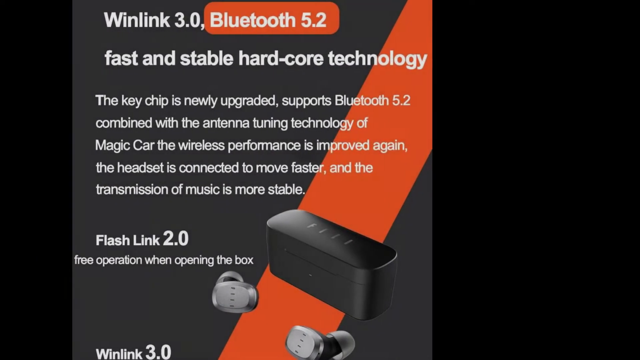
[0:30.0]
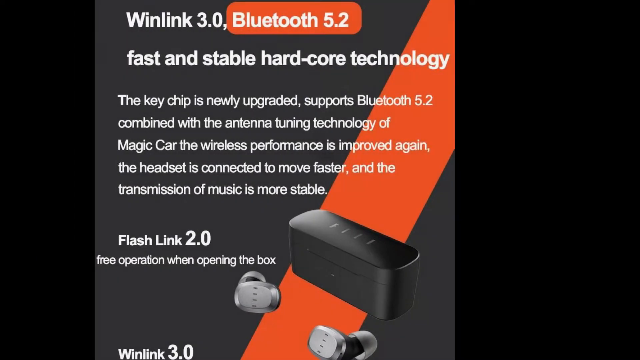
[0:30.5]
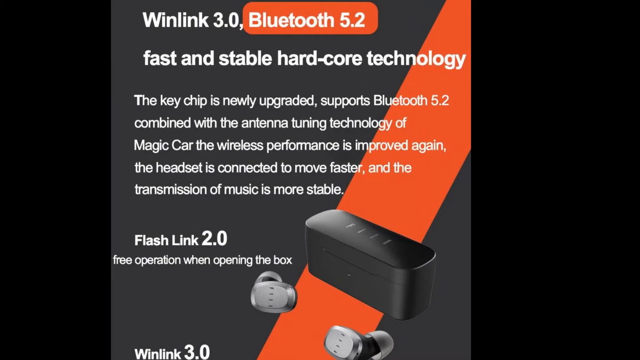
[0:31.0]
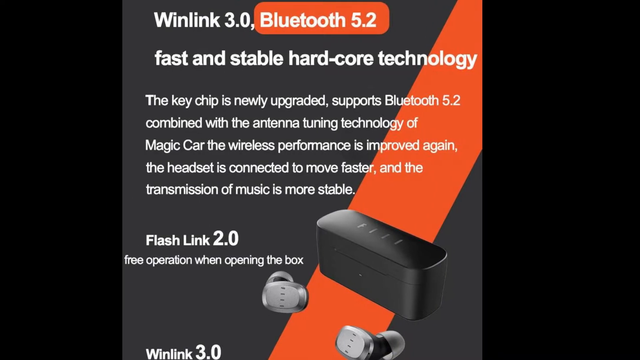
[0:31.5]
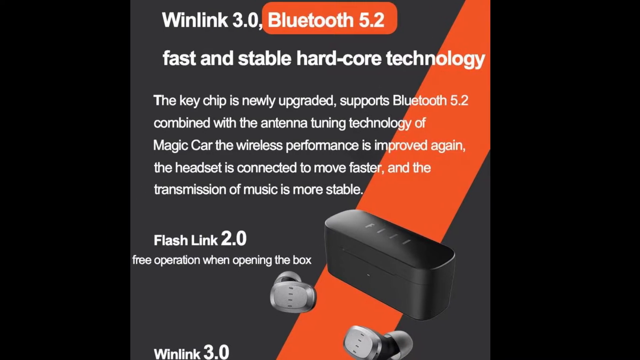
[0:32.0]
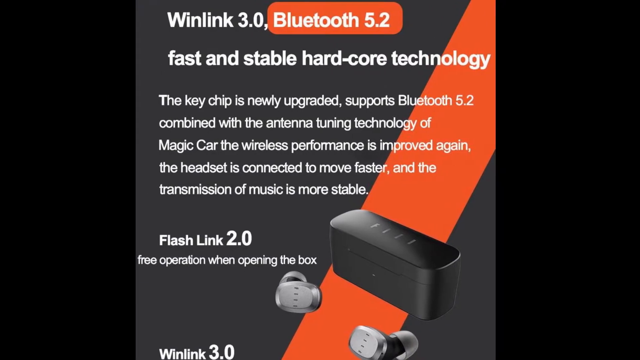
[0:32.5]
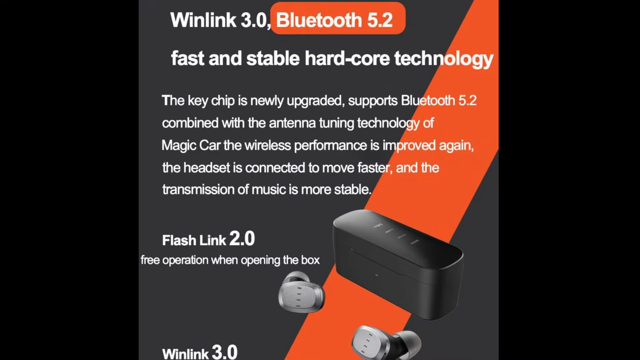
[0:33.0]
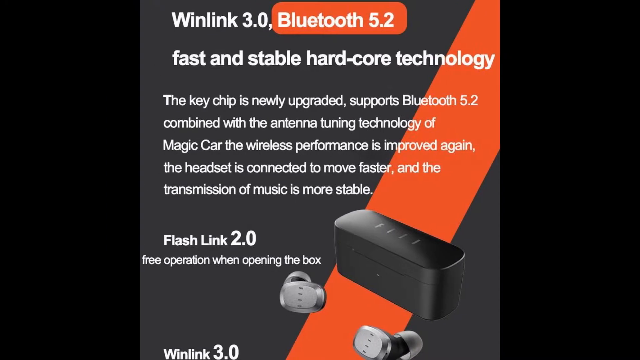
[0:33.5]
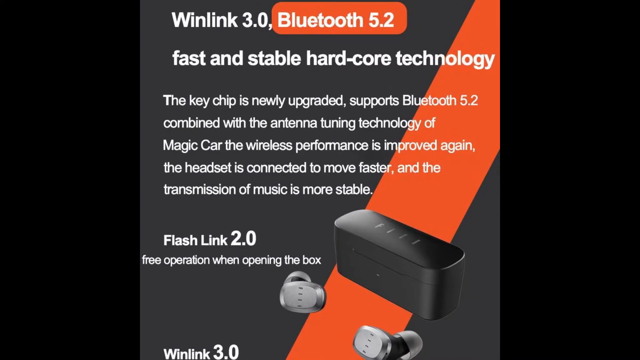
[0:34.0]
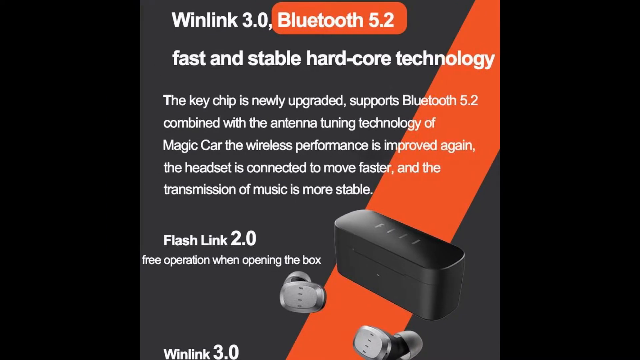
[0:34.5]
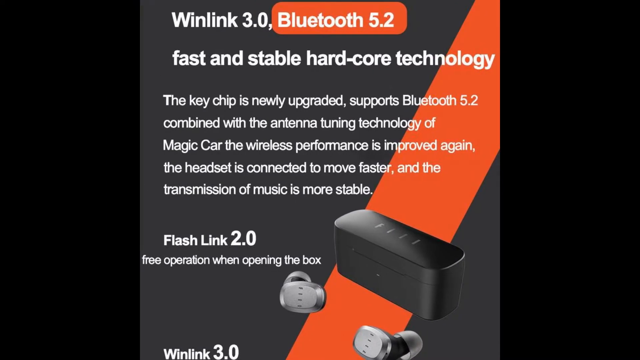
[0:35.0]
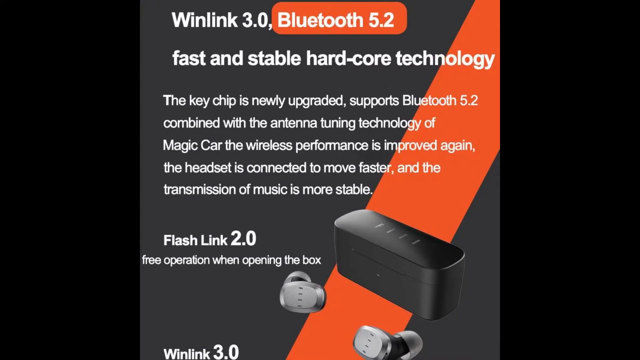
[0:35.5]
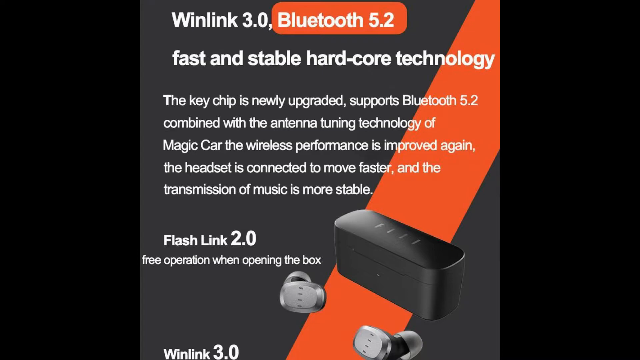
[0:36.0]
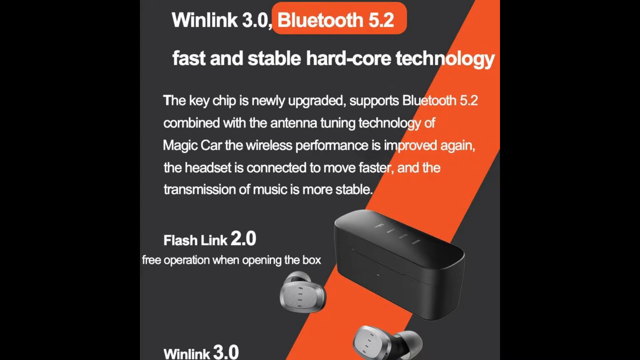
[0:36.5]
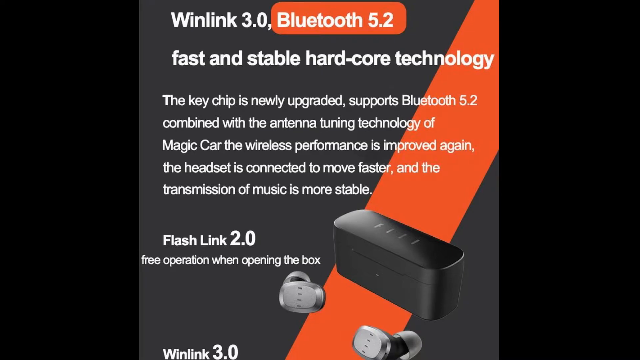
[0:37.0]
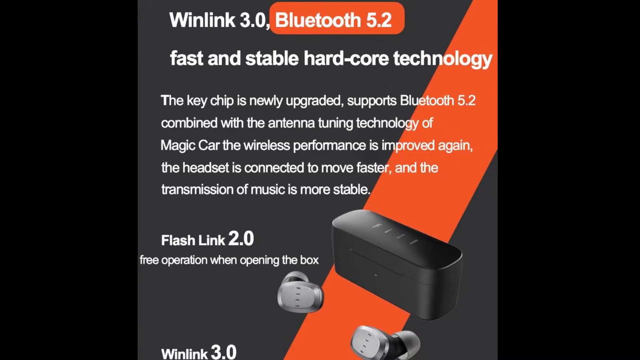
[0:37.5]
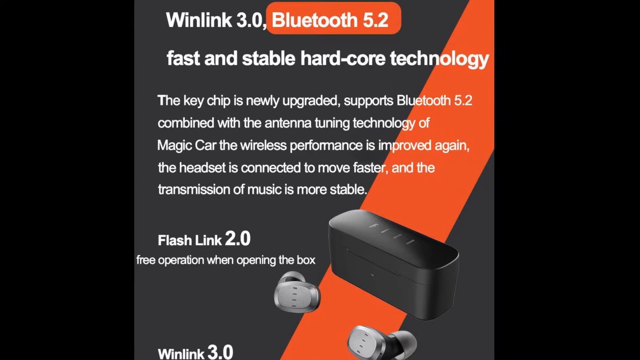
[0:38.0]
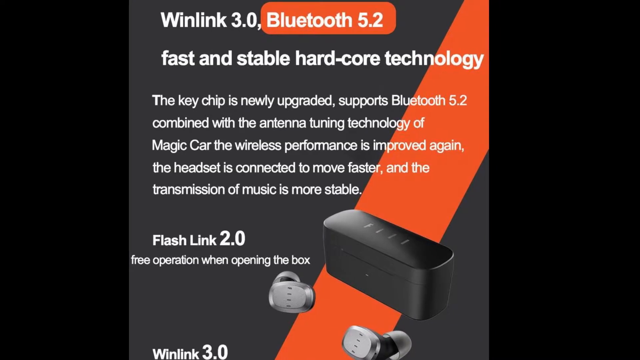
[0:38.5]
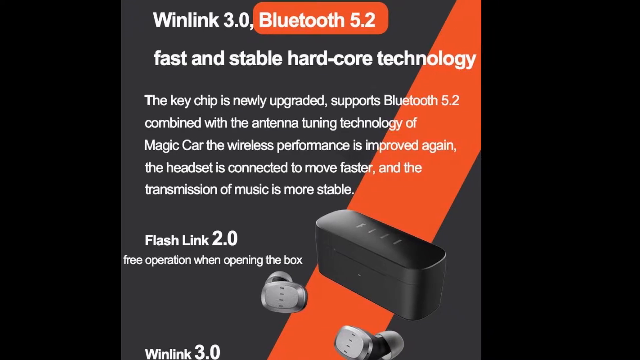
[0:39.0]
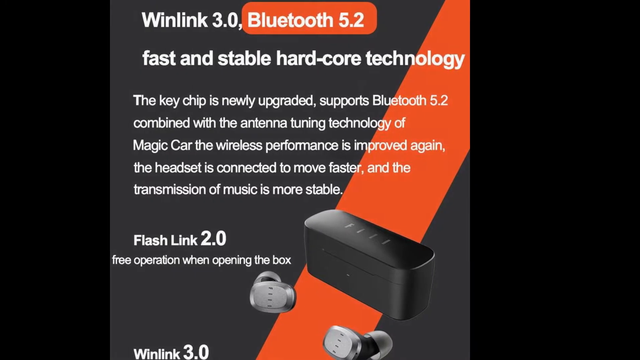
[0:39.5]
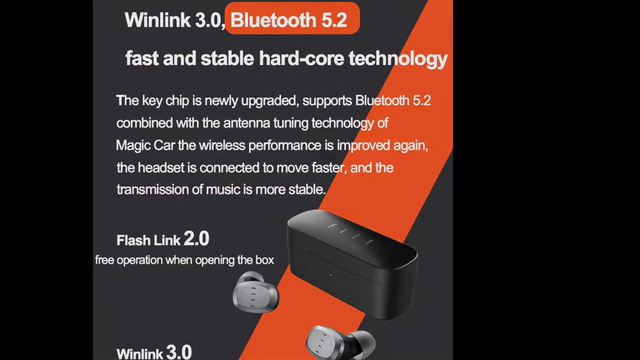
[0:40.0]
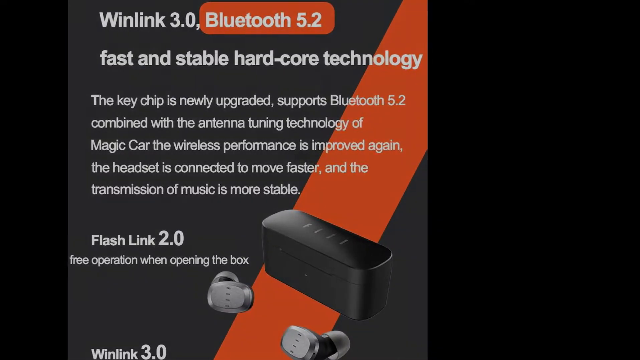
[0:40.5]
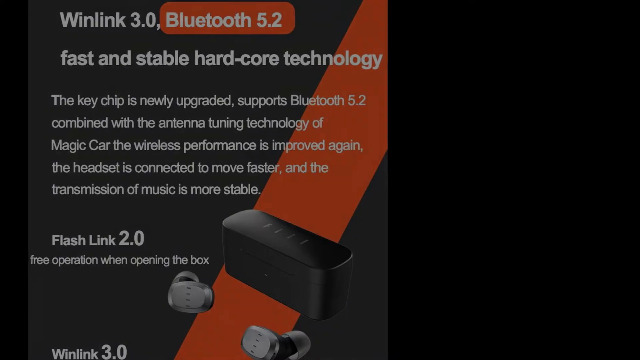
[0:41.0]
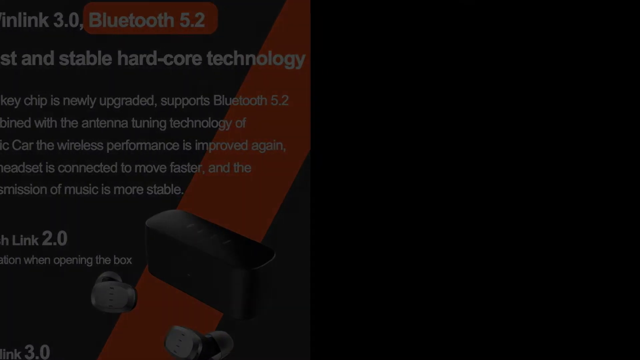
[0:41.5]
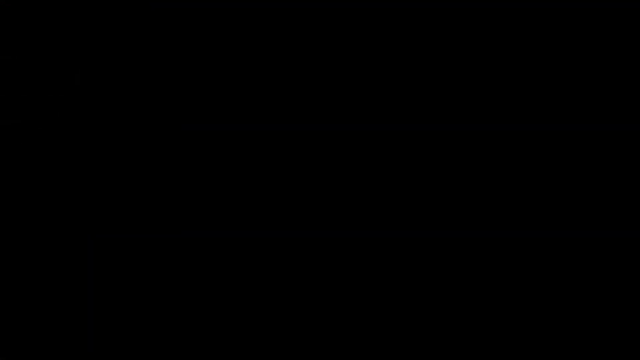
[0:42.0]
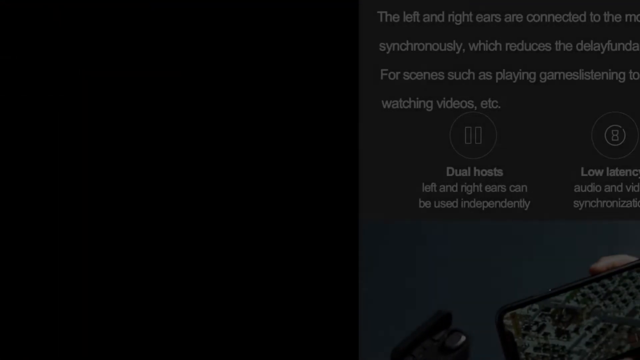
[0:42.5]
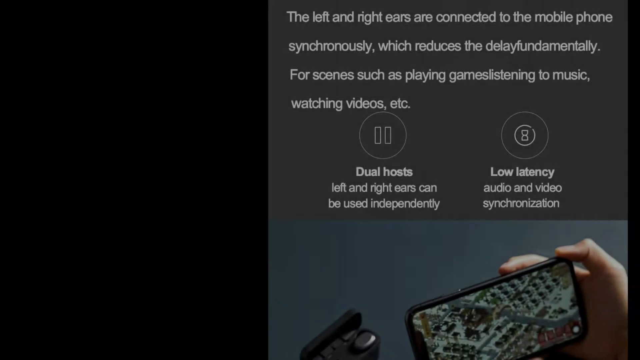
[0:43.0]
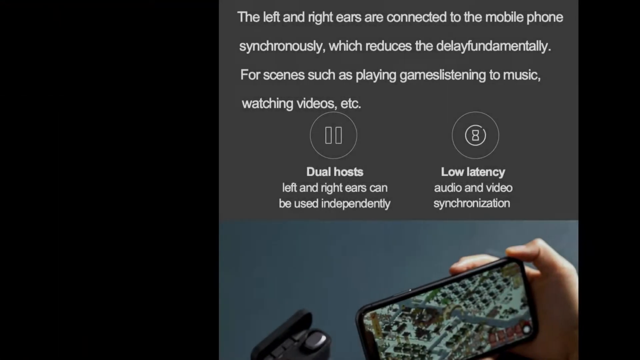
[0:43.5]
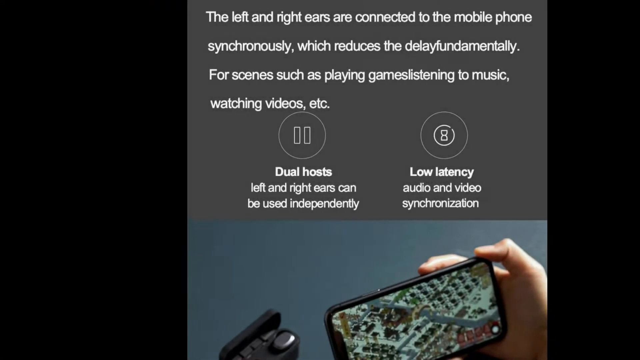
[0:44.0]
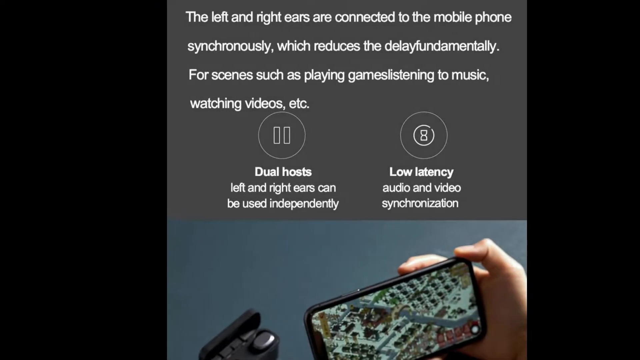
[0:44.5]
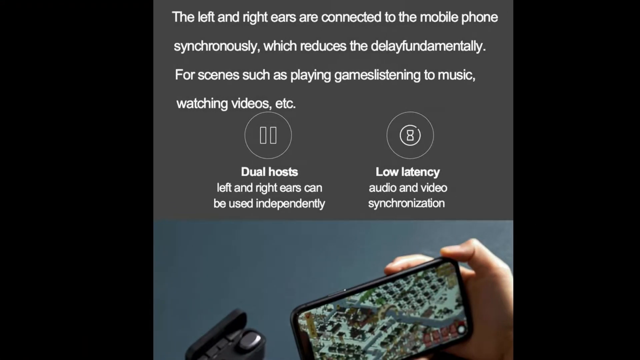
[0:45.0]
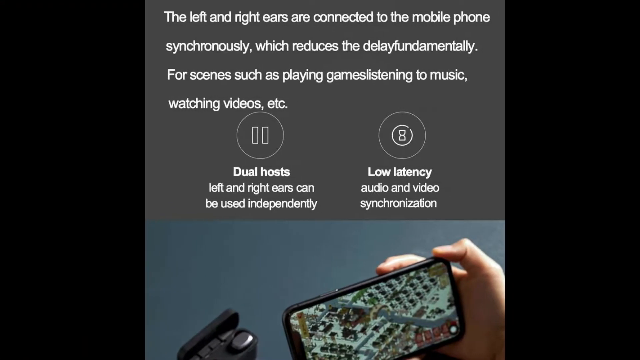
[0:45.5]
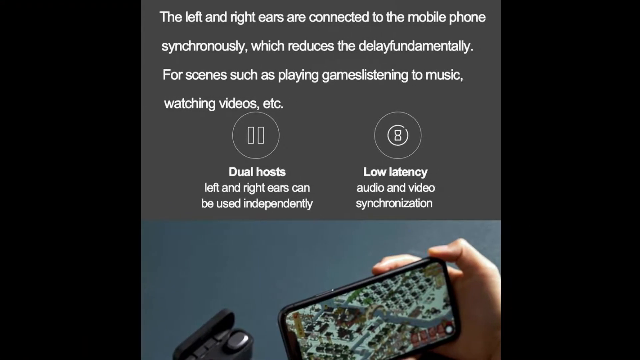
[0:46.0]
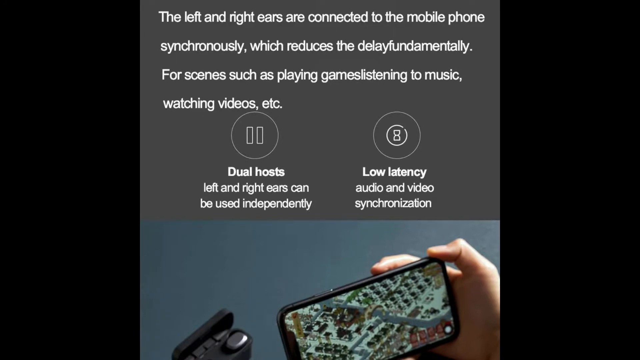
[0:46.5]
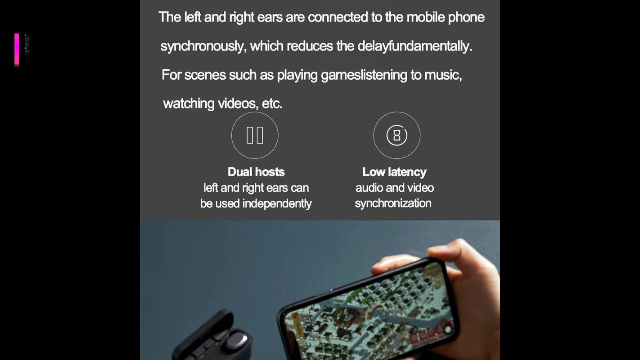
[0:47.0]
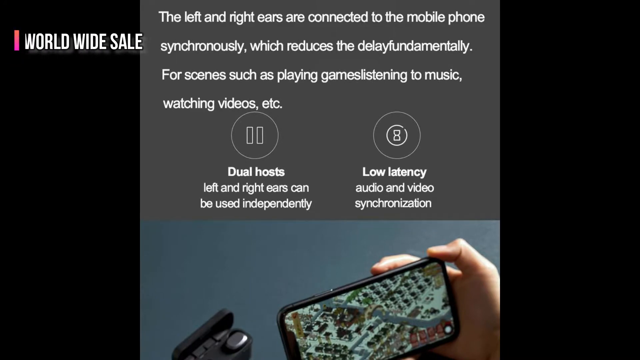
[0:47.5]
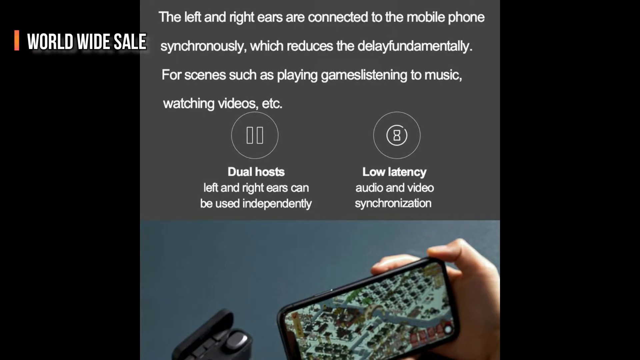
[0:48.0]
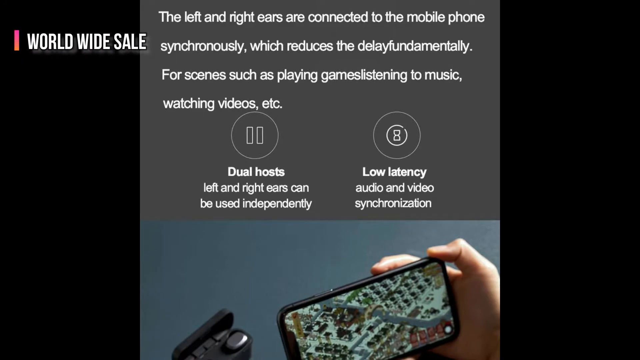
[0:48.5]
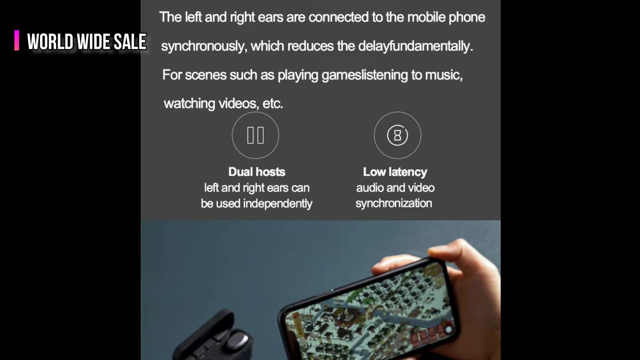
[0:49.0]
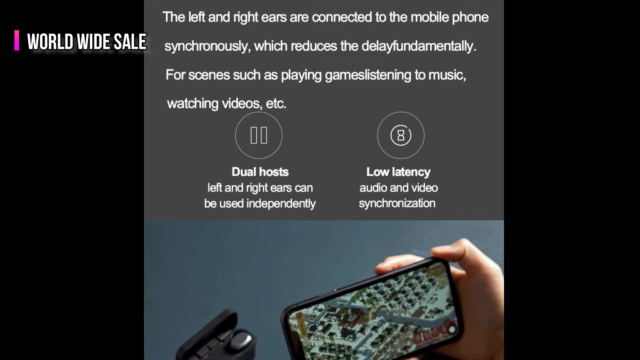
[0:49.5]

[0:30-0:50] The WinLink 3.0 advert shows white text on a dark grey background with an orange stripe. The text describes it as a fast and stable hardcore technology, saying the key chip has been newly upgraded and now supports Bluetooth 5.2, combined with the antenna tuning technology of Magic Car, so wireless performance is better than before, the headset connects faster and music transmission is more stable. It also mentions FlashLink 2.0, which operates freely when the box is opened. The image also shows the buds and their carrying case. The advert scrolls off to the left and is replaced by another advert explaining that the left and right ears are connected to the mobile phone synchronously, which reduces the delay fundamentally; two of its words are run together in a typo. The text also mentions scenes such as playing games, listening to music and watching videos, and states that a worldwide sale is taking place.